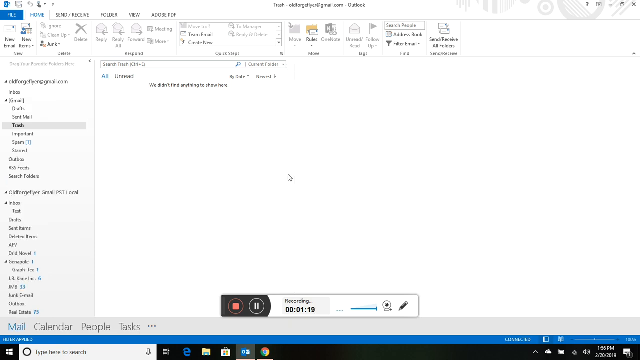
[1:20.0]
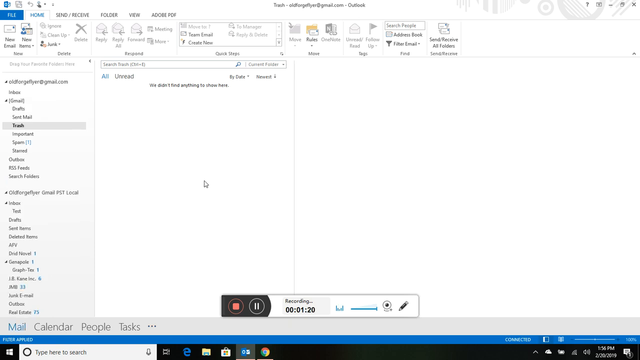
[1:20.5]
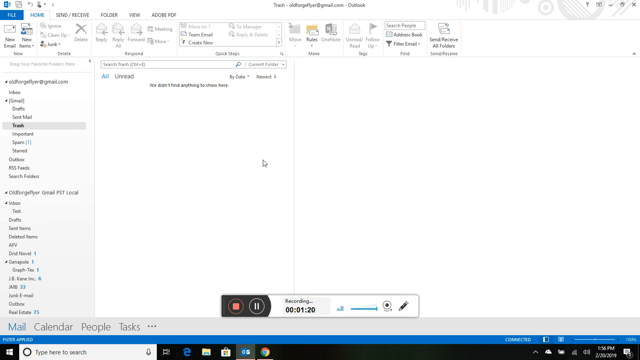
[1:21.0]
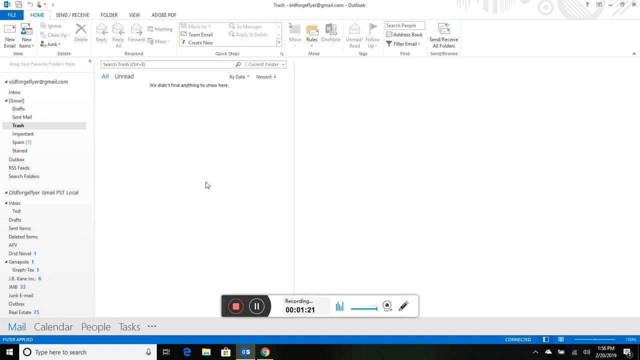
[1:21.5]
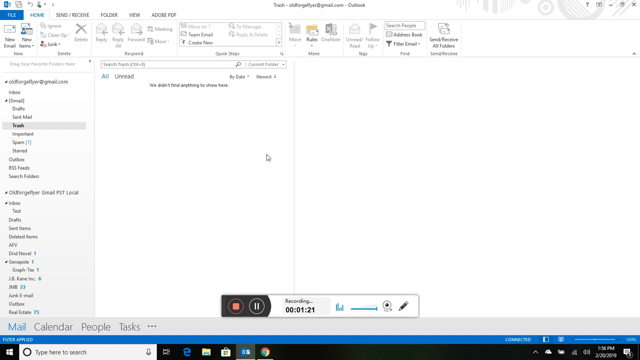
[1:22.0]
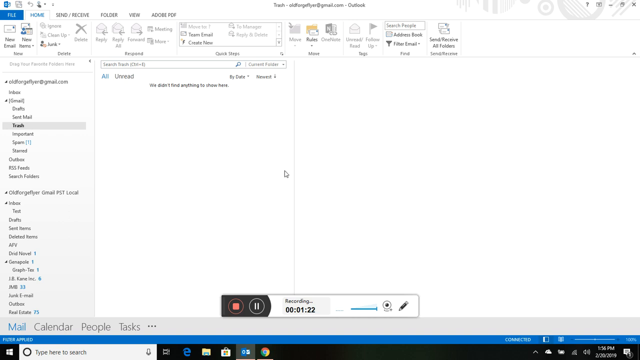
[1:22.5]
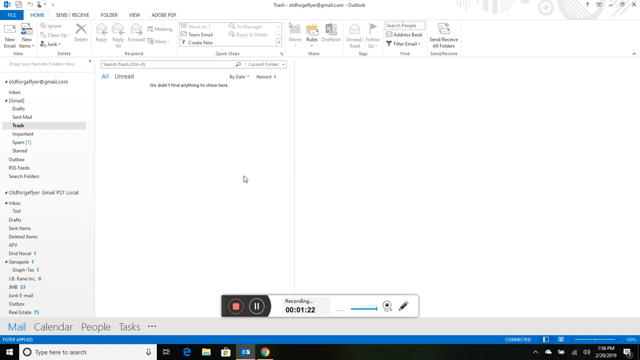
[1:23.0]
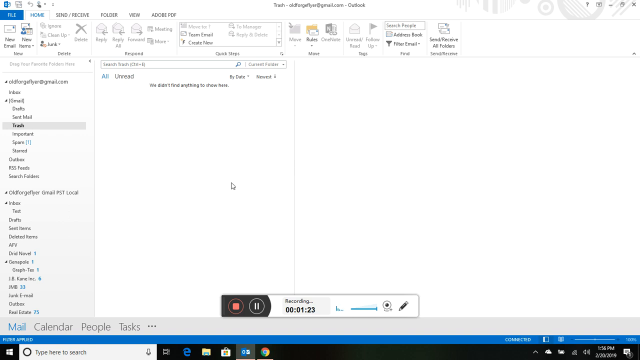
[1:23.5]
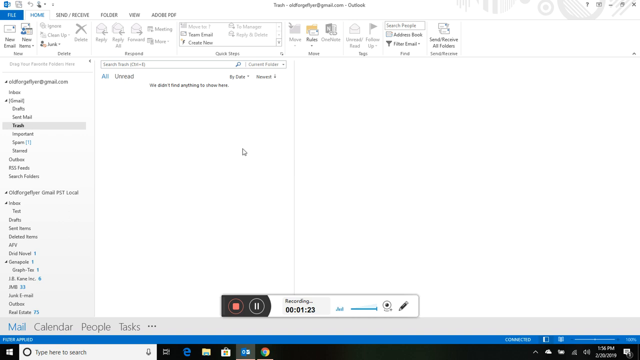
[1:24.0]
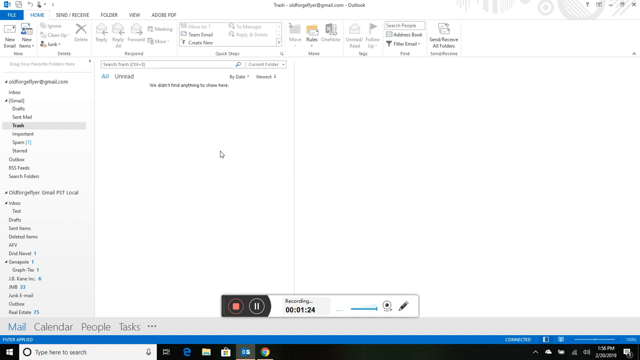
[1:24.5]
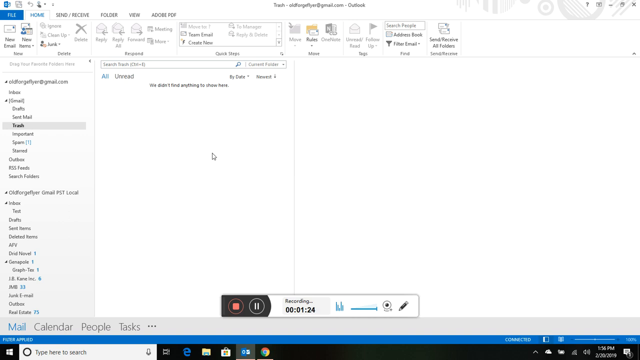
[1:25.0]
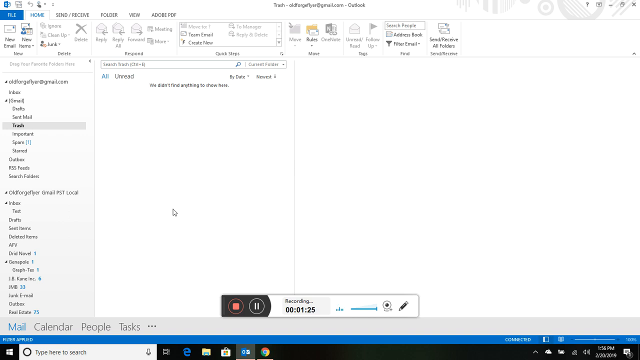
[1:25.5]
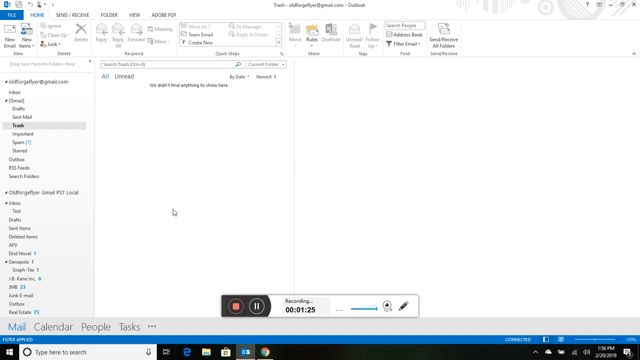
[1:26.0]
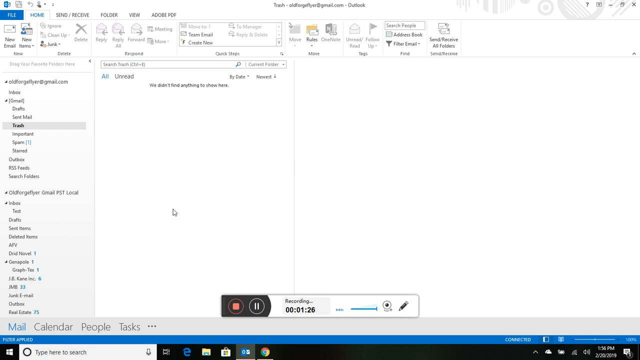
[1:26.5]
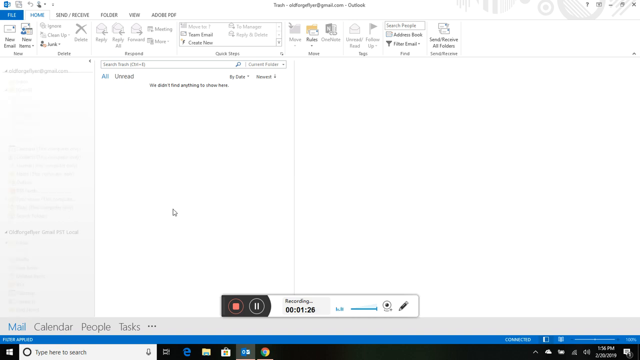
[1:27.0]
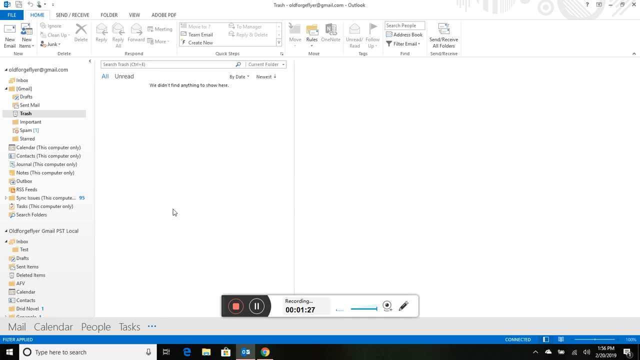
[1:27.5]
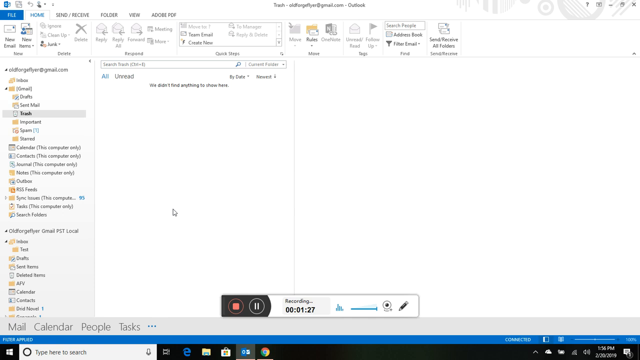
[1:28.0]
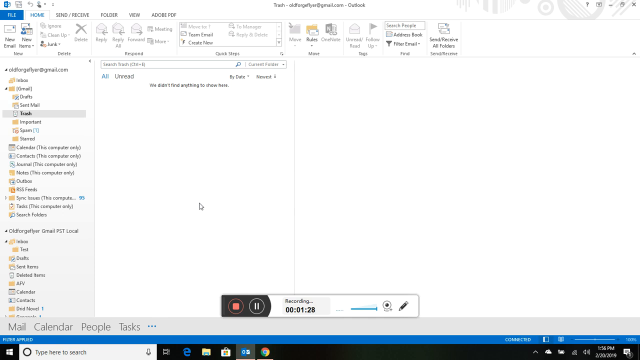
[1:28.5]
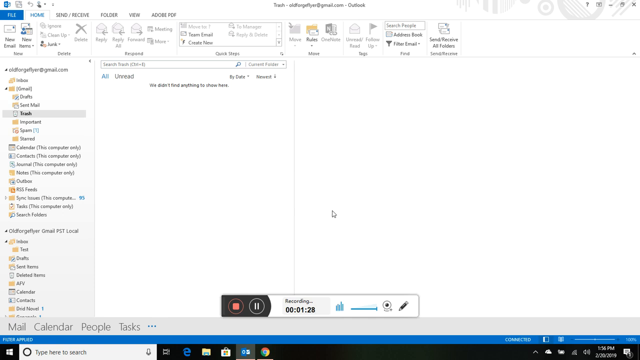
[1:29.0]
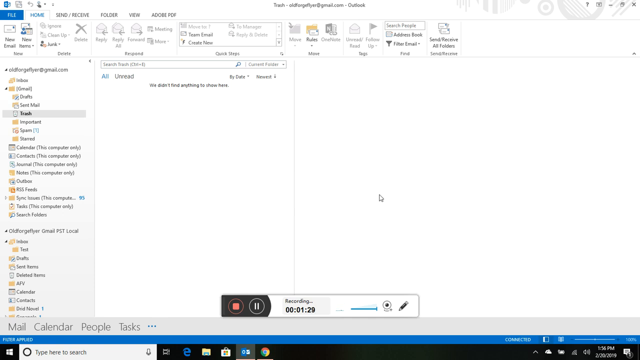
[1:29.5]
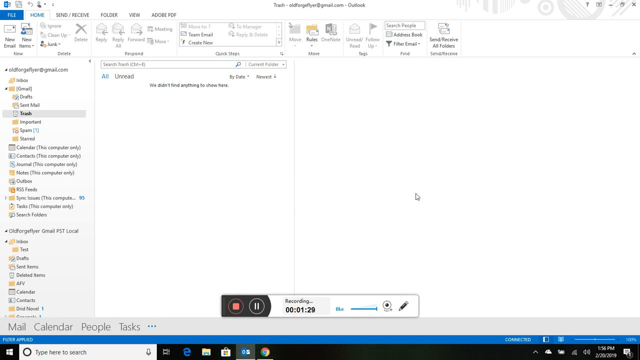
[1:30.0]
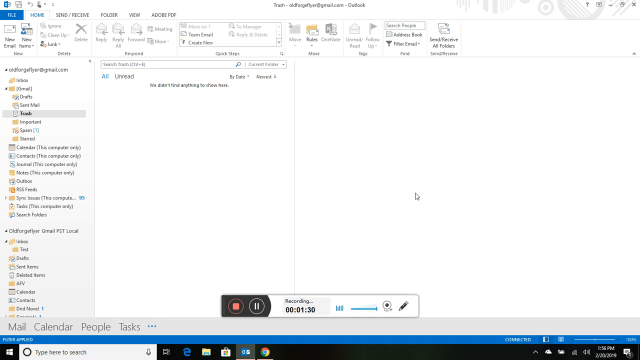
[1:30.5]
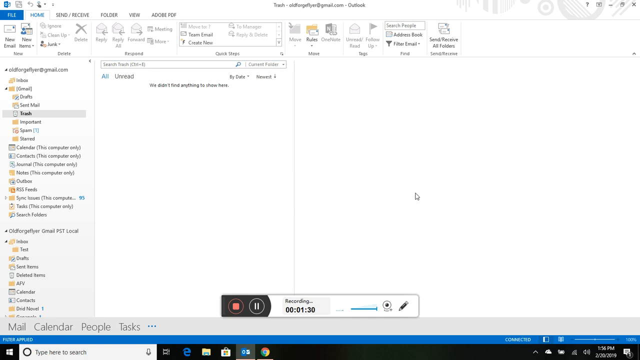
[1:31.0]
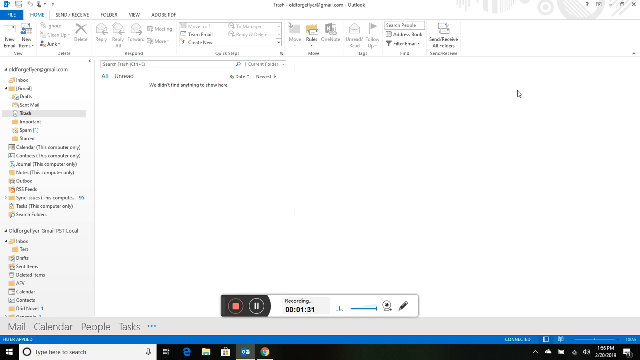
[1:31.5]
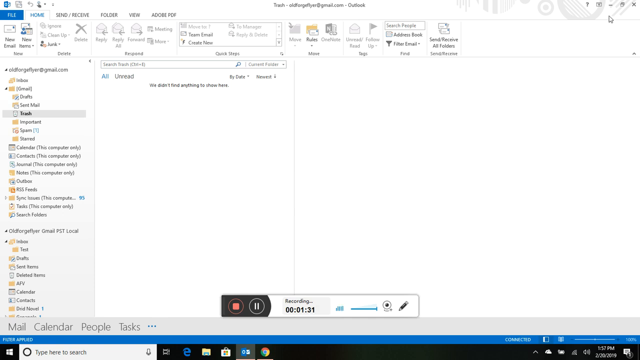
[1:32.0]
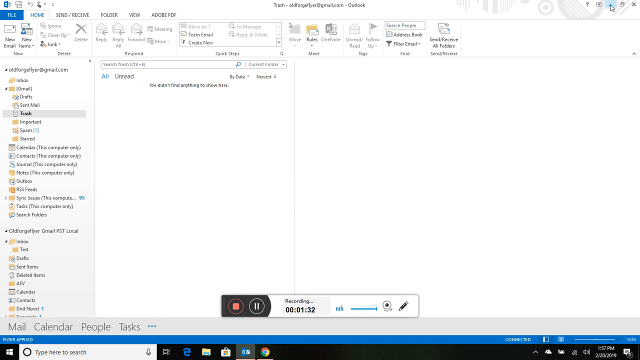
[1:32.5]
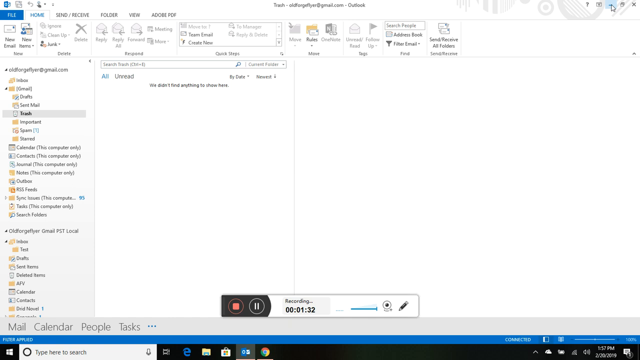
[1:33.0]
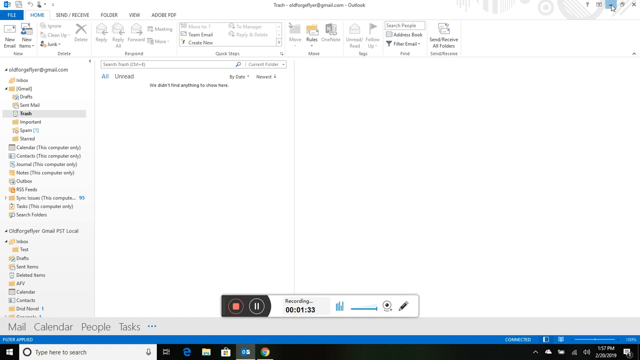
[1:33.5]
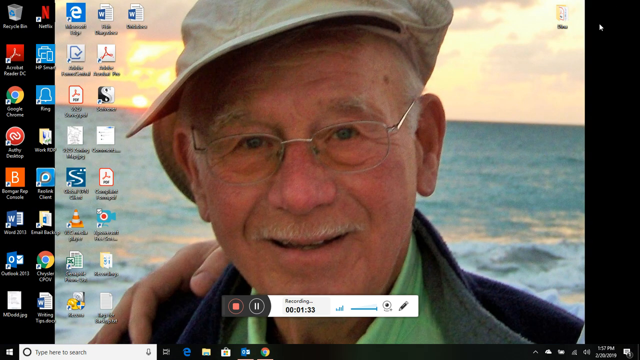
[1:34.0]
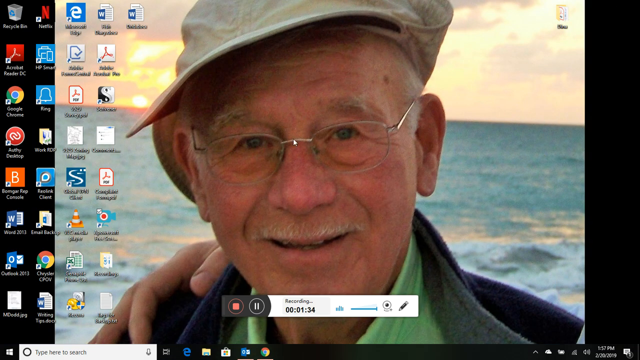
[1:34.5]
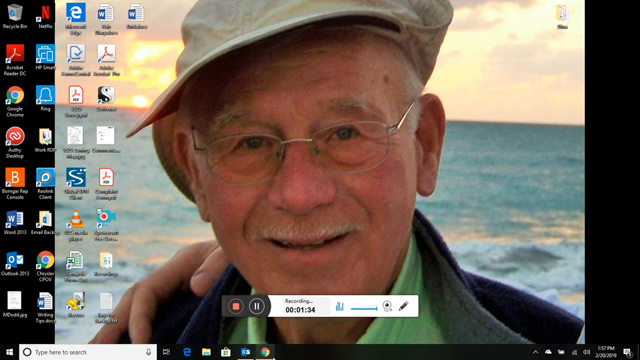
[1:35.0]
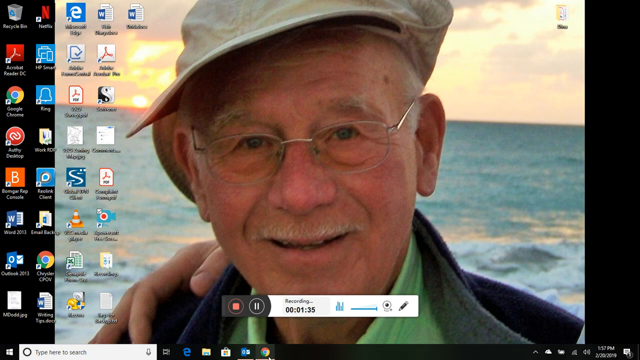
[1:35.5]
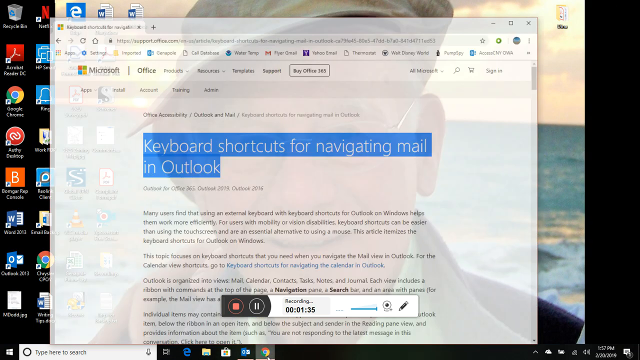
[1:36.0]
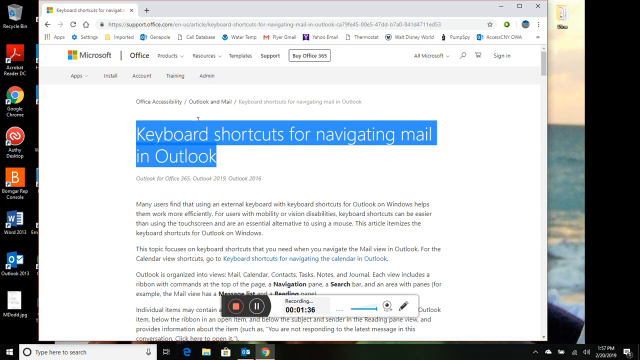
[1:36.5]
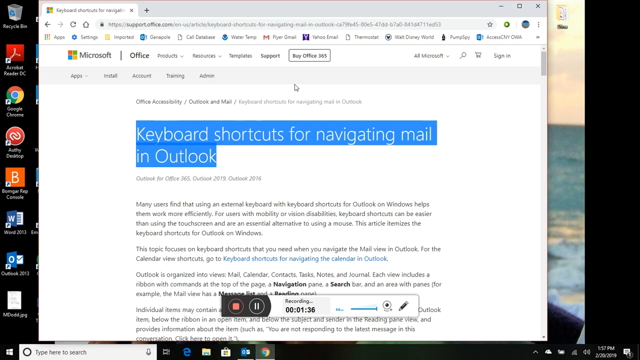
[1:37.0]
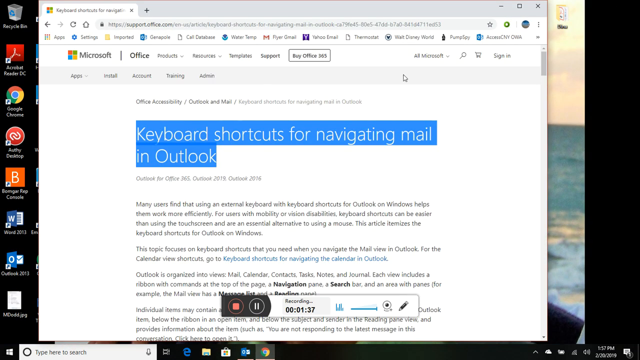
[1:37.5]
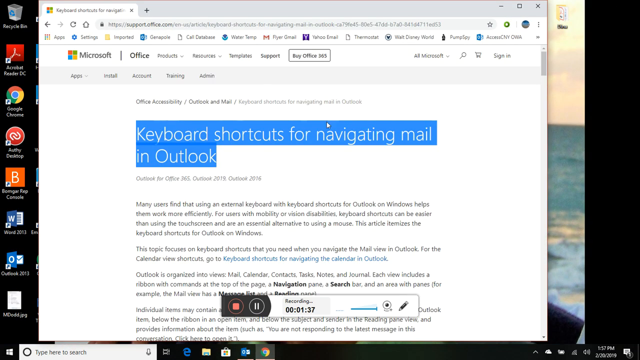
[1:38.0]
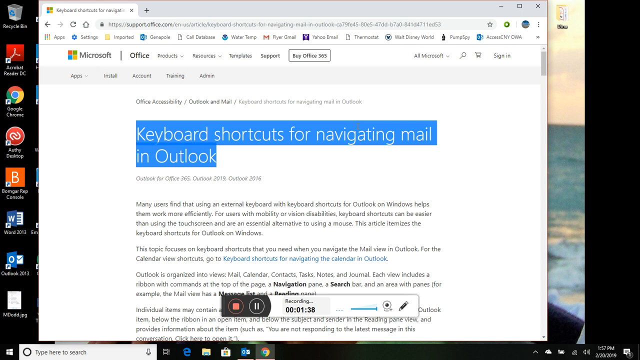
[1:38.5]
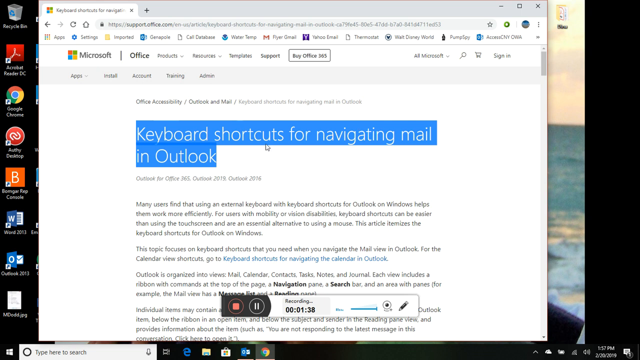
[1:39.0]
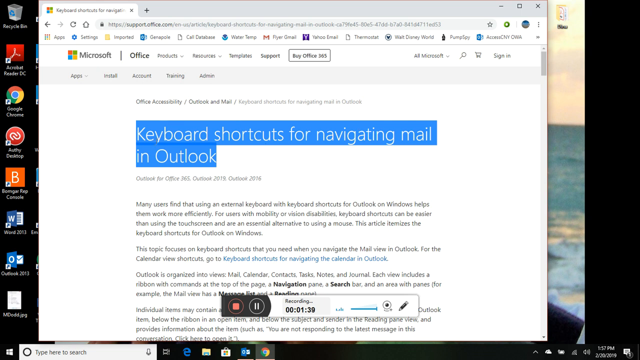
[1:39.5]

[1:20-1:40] The man is on a Microsoft website, searching for keyboard shortcuts to navigate. The screen with the old man wallpaper is shown, and he keeps trying to make something work.